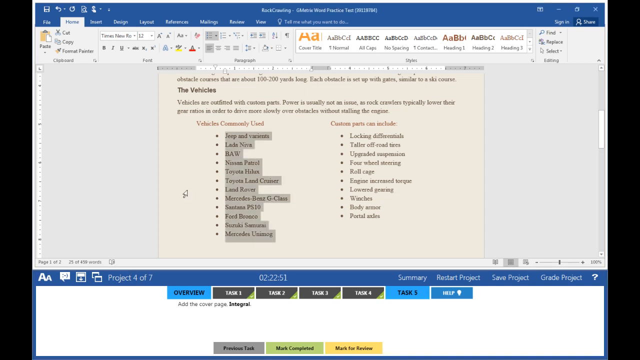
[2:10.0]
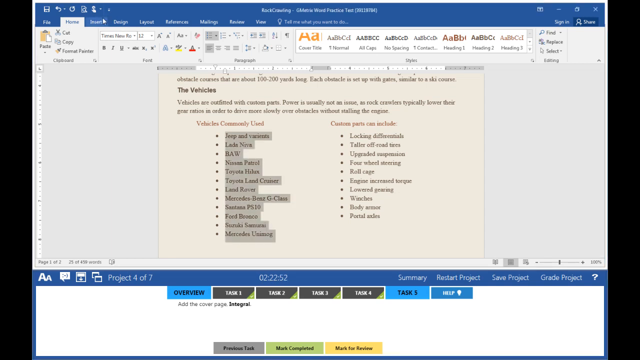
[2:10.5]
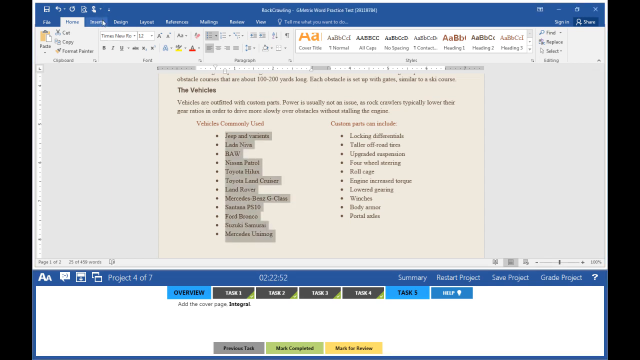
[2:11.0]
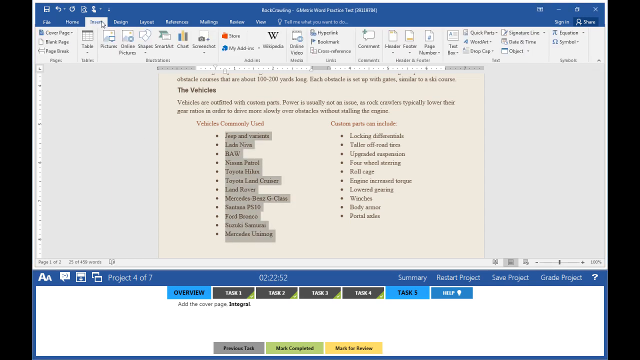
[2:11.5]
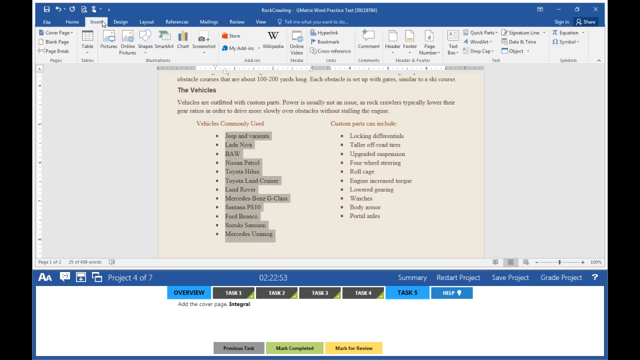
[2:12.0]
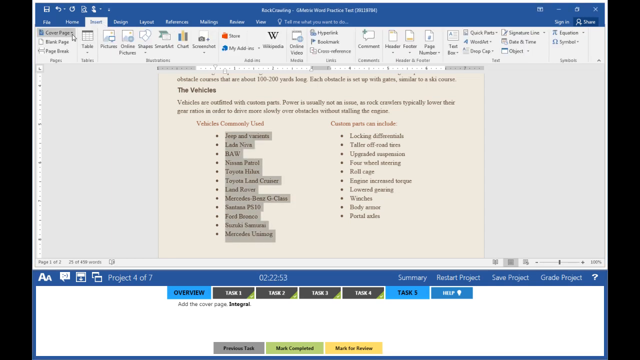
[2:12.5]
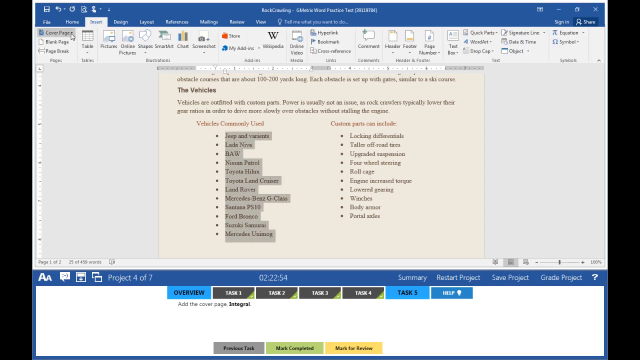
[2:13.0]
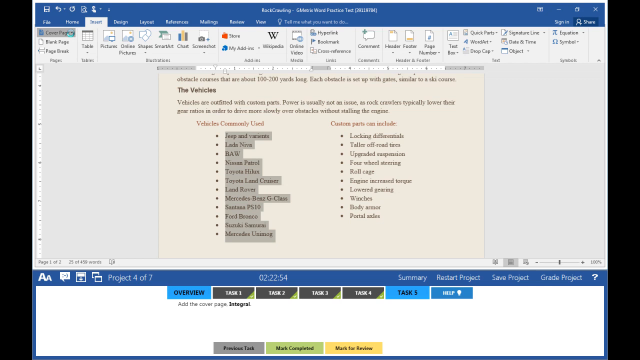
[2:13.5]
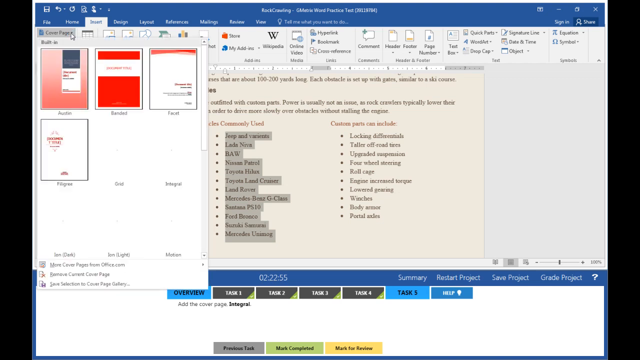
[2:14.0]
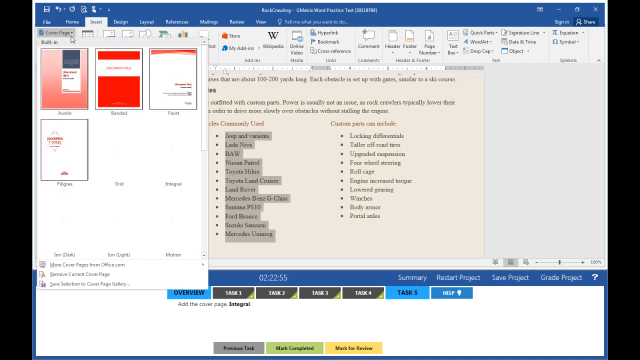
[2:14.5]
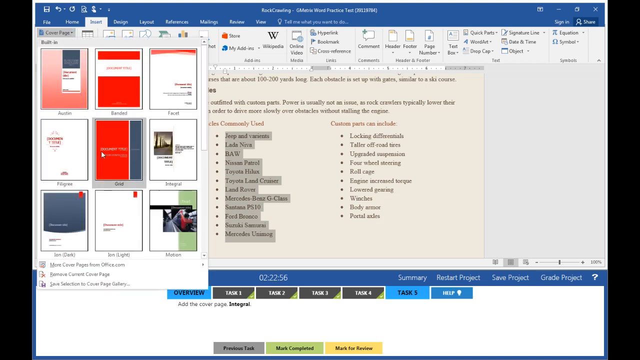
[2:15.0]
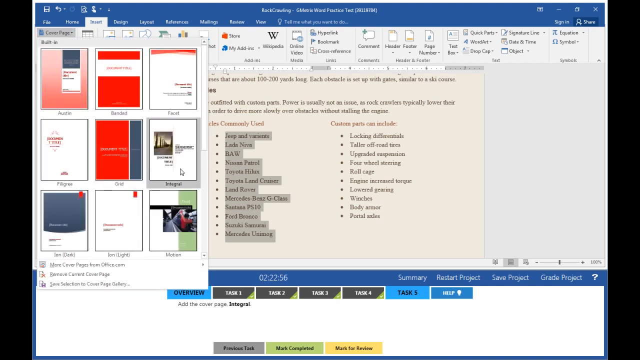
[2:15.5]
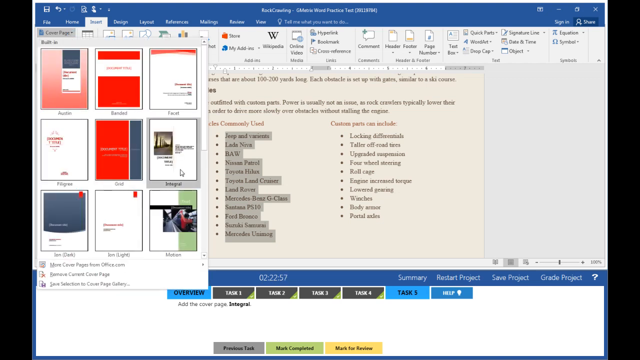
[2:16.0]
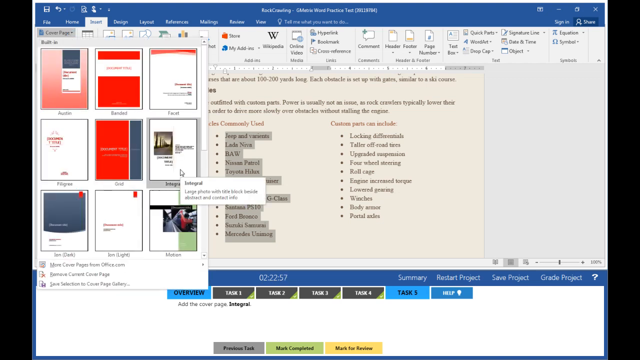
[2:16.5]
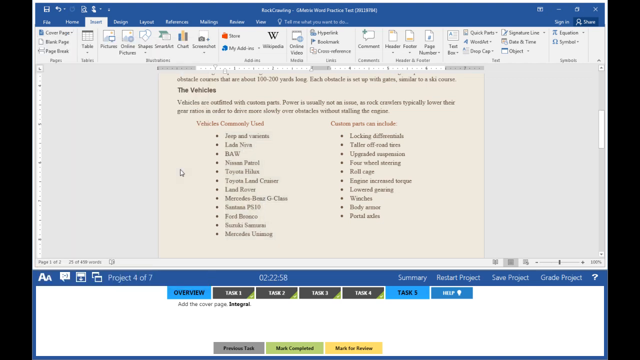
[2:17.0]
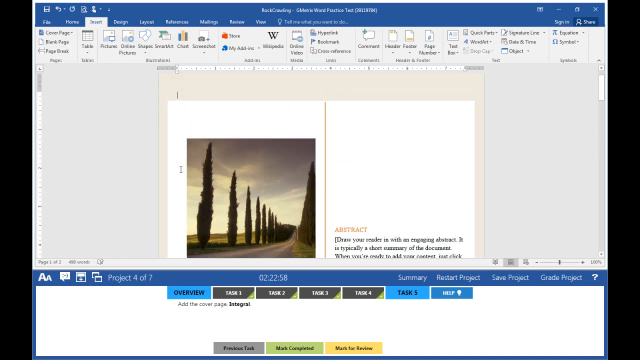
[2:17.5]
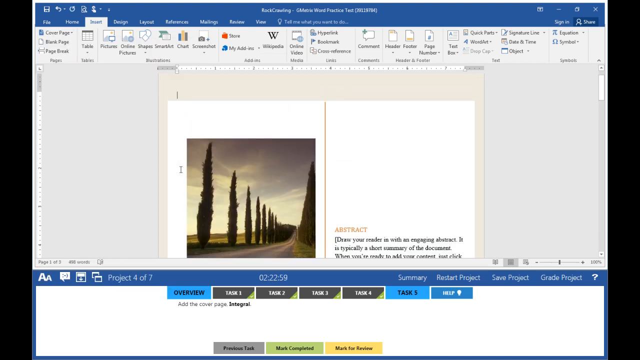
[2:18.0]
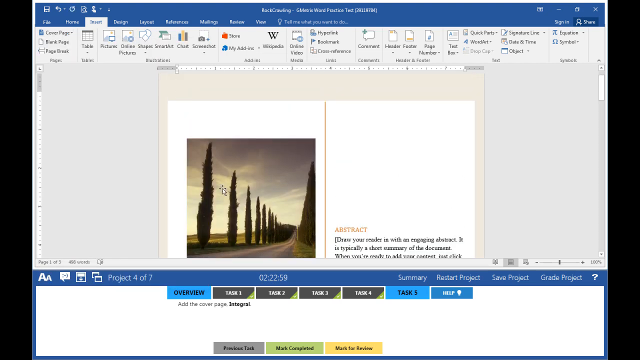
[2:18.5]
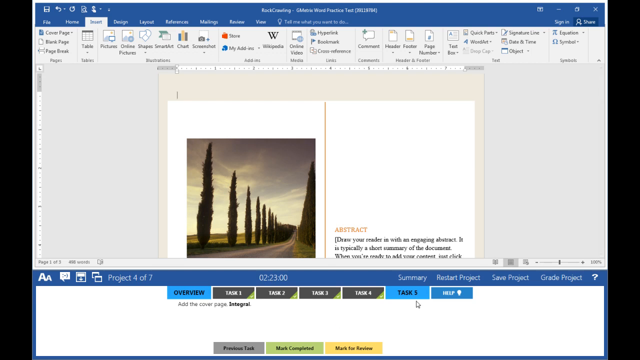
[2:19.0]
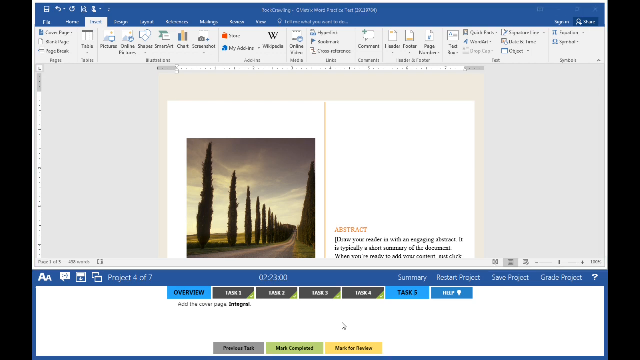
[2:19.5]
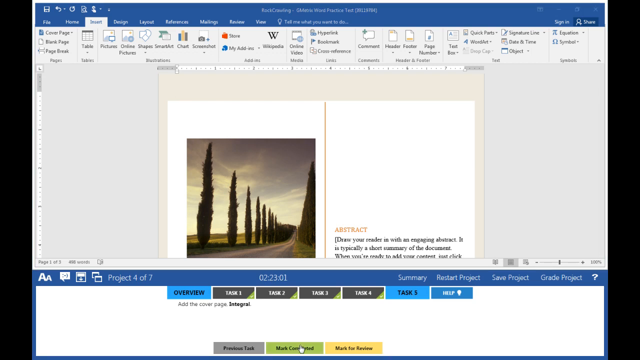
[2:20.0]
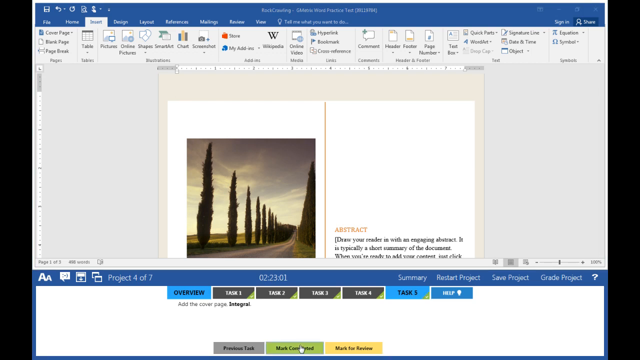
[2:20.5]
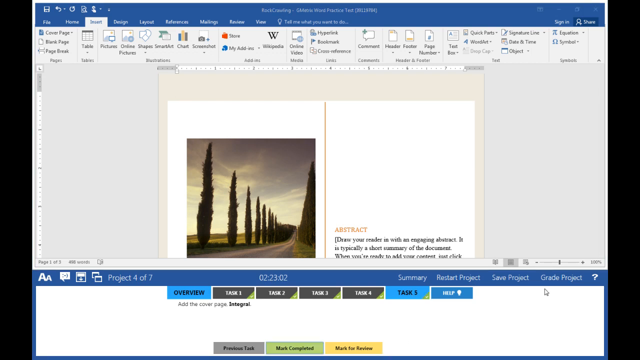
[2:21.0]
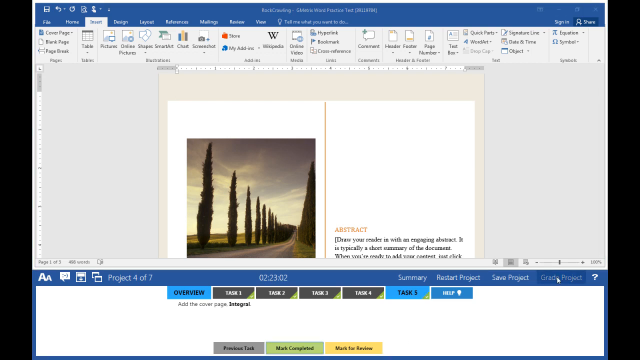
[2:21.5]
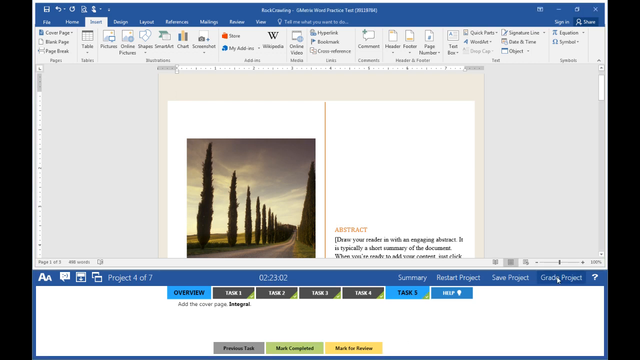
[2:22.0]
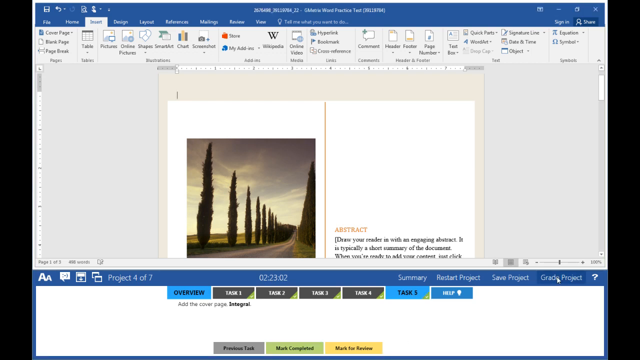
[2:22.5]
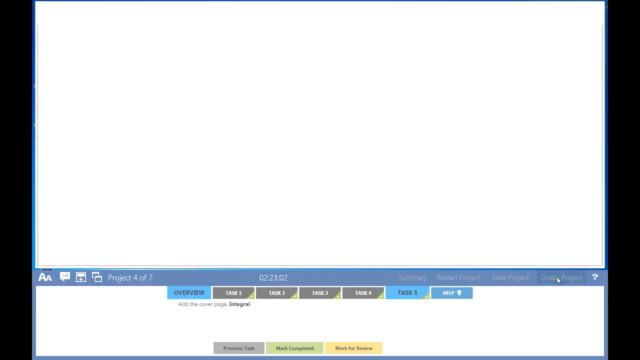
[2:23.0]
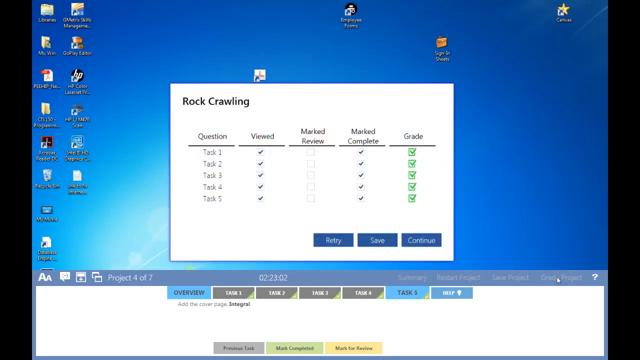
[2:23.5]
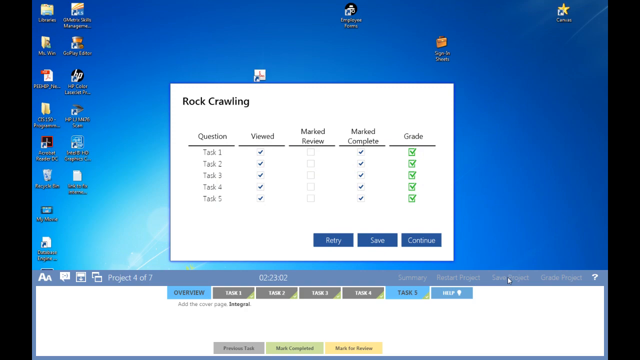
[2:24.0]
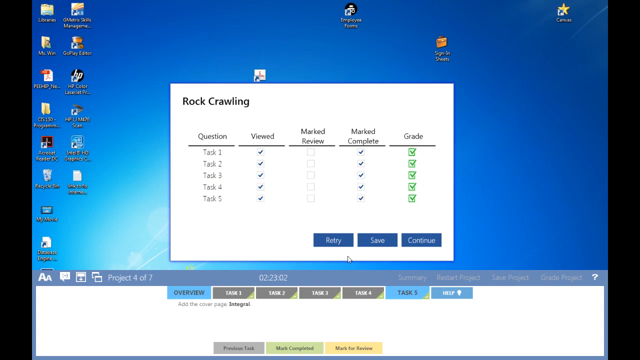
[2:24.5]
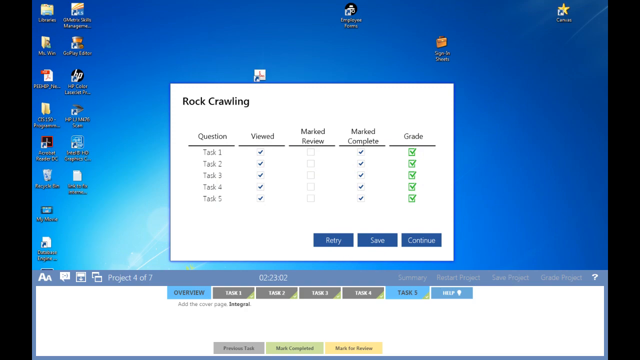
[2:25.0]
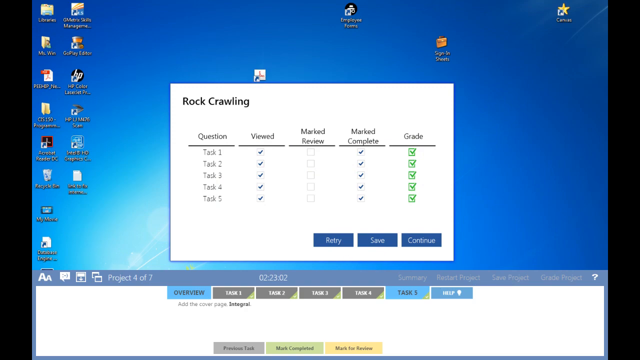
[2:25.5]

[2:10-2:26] The person works on task five, which says "add the cover page integral." They highlight "vehicles commonly used," then go to cover page on the left and click the one that says "integral." A "mark completed" option appears. They then go to some type of checkoff item that says "rock crawling," which seems to be on their desktop. At the very end they reach their desktop, where a very small document is open that says "rock climbing" and has checkoff boxes.